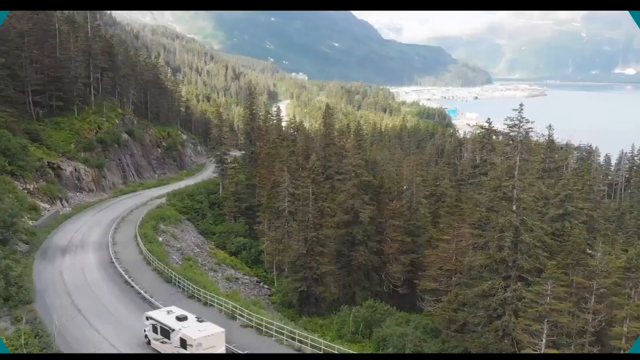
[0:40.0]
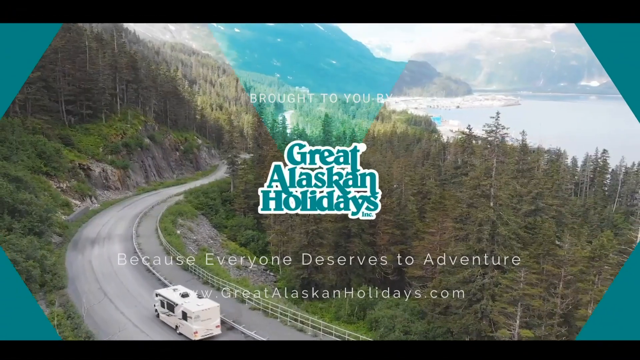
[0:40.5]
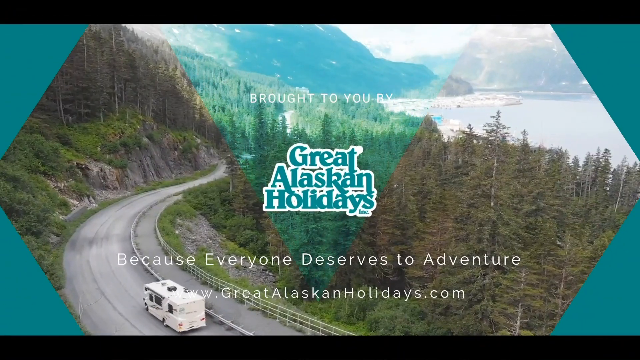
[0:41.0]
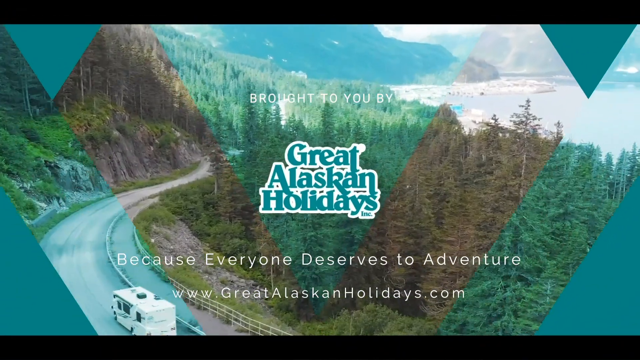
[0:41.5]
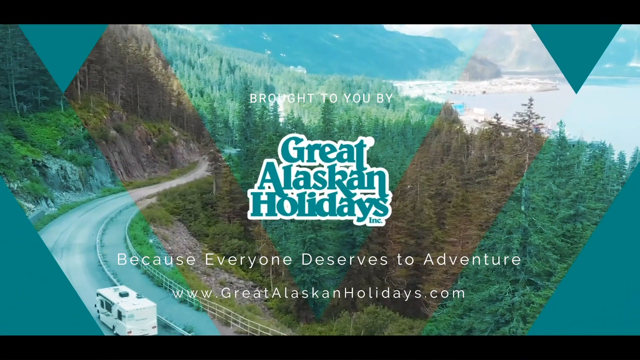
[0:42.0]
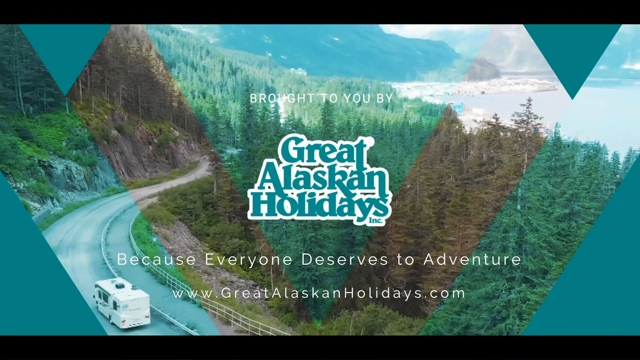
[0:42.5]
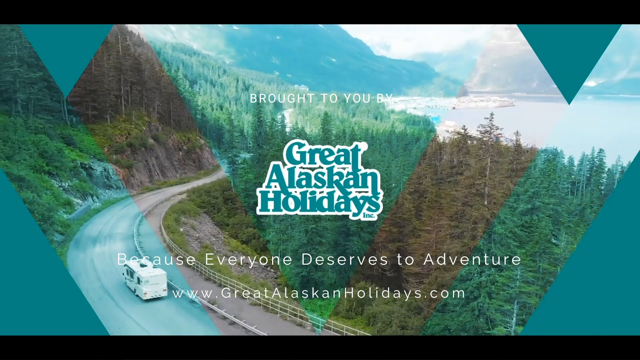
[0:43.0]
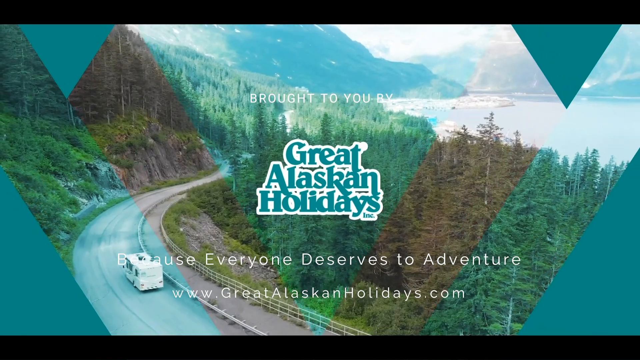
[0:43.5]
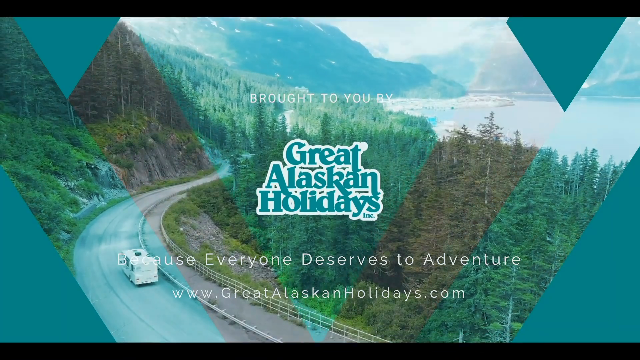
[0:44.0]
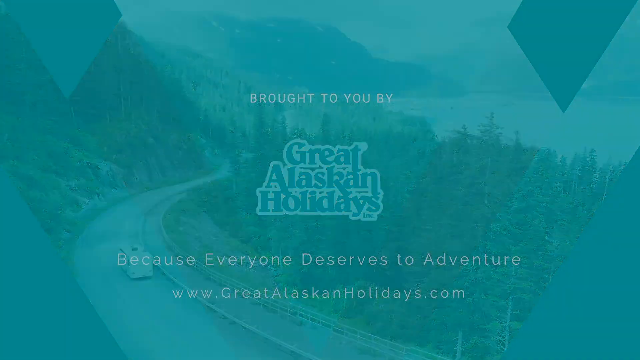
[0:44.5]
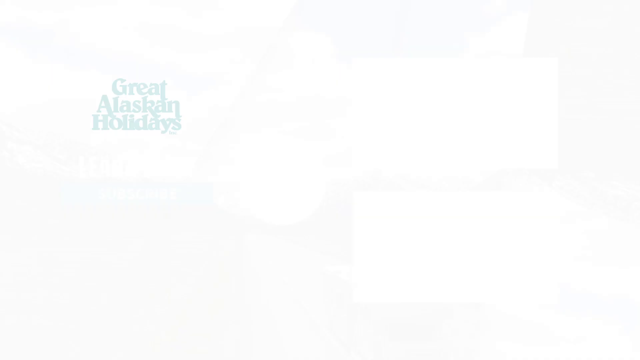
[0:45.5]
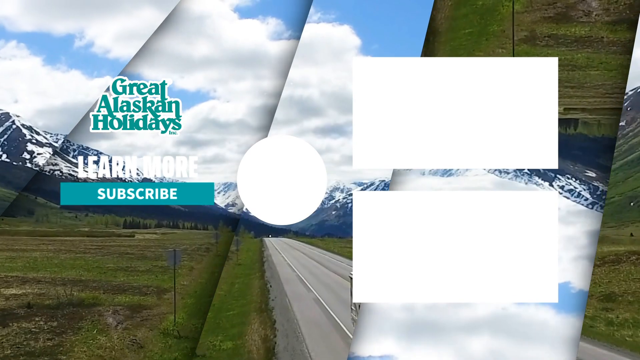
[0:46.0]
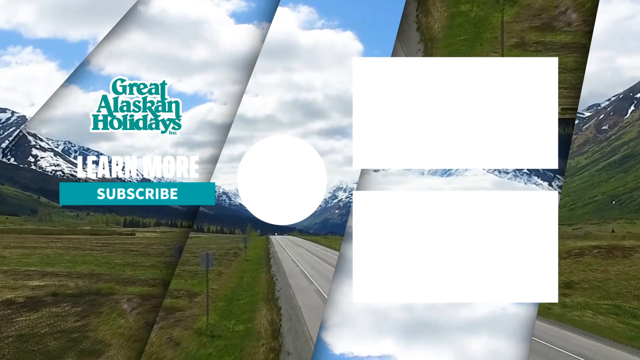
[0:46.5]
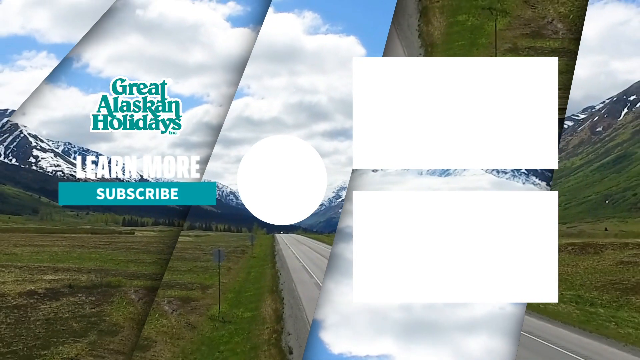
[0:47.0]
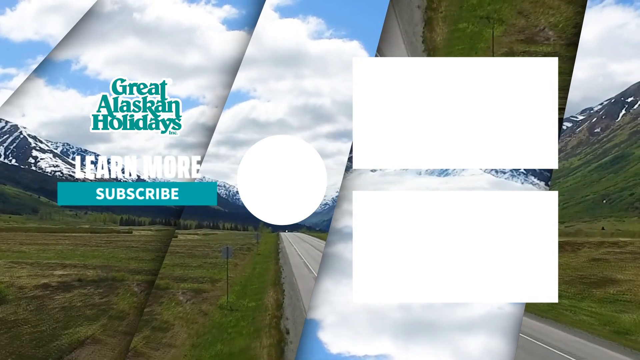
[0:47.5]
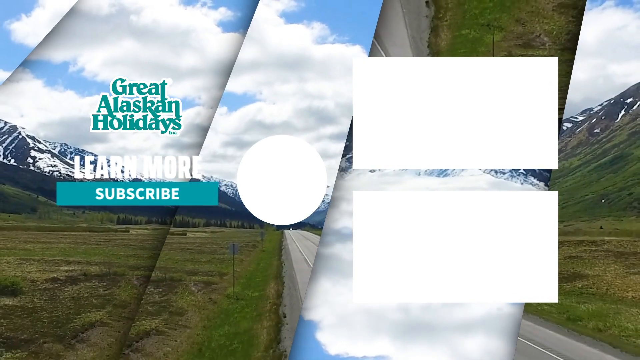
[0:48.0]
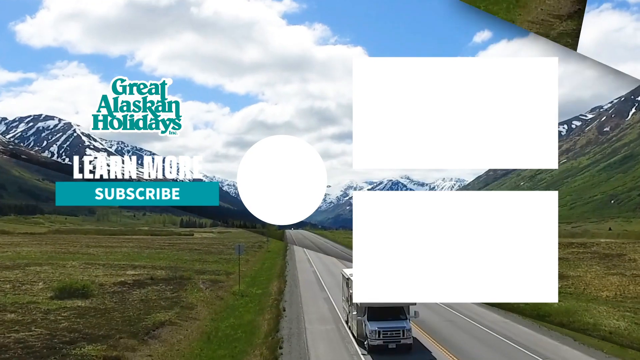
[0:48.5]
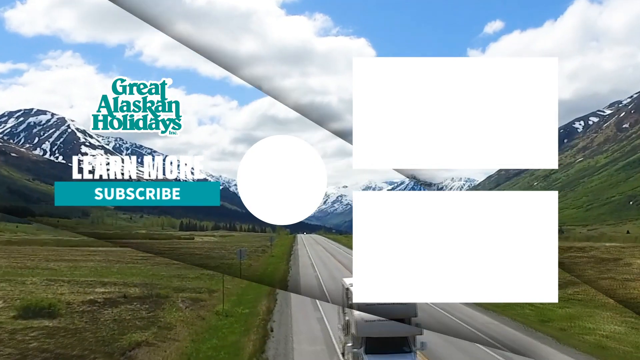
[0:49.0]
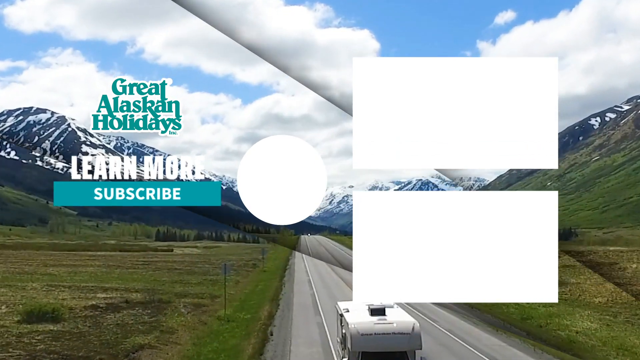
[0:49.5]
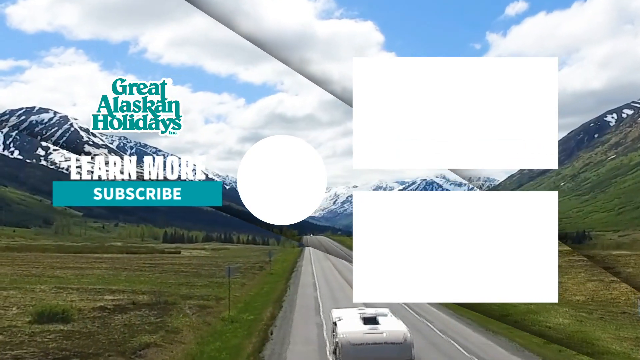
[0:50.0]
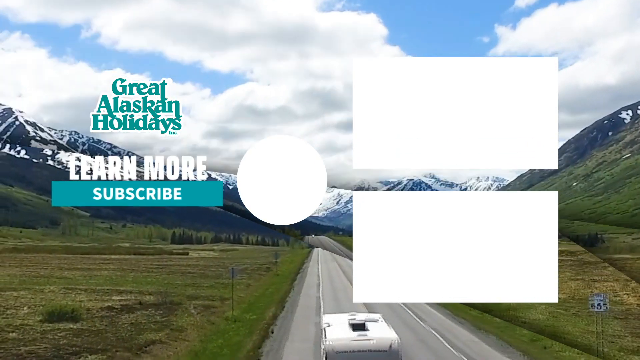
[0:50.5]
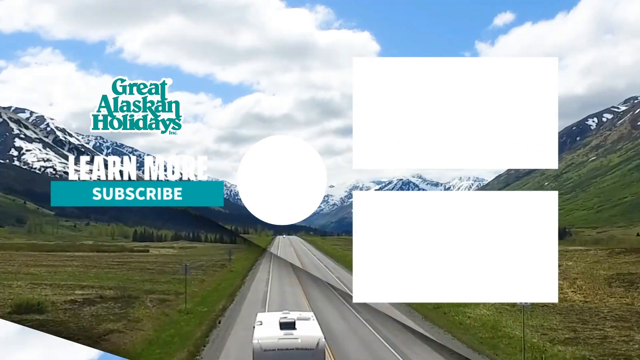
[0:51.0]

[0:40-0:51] A large pine forest on the shores of a lake comes into view, with a road winding round between the pine trees. The camera zooms out. A V-shaped icon spreads out from the screen and the words "Great Alaskan Holidays" appear in the centre, with the tagline "because everyone deserves to adventure" underneath. A caravan moves slowly along the winding road away from the camera, and the camera zooms out. The screen fades to blue, and "Learn More" and "Subscribe" buttons appear alongside two rectangles that apparently link to other videos.